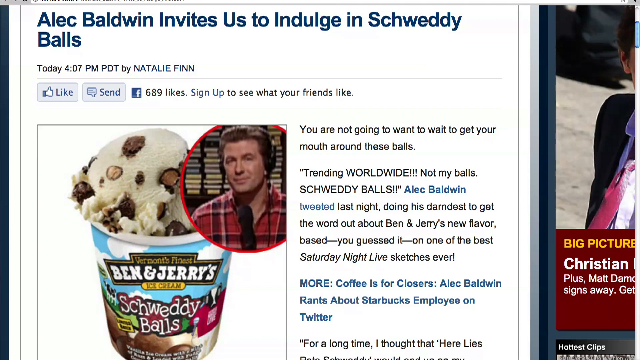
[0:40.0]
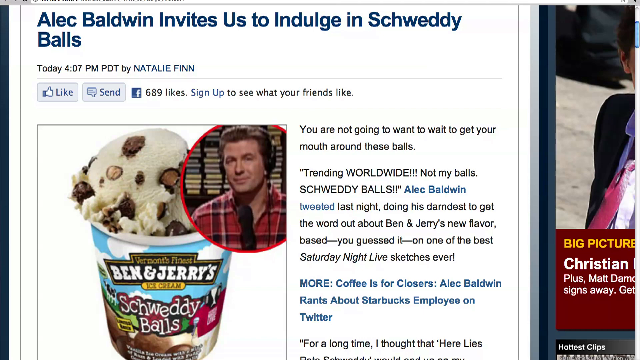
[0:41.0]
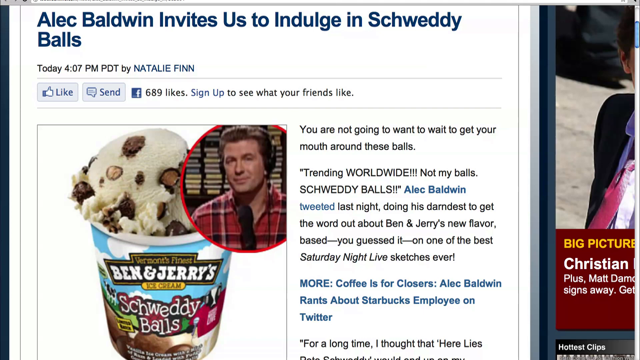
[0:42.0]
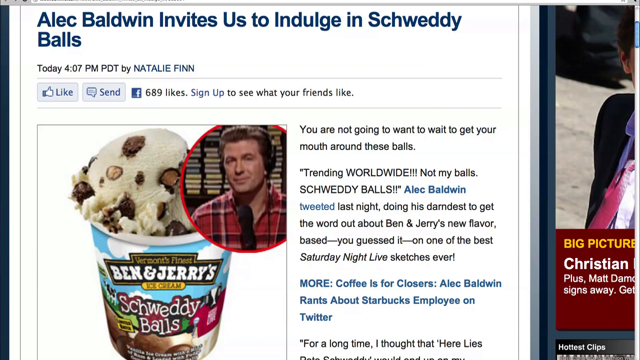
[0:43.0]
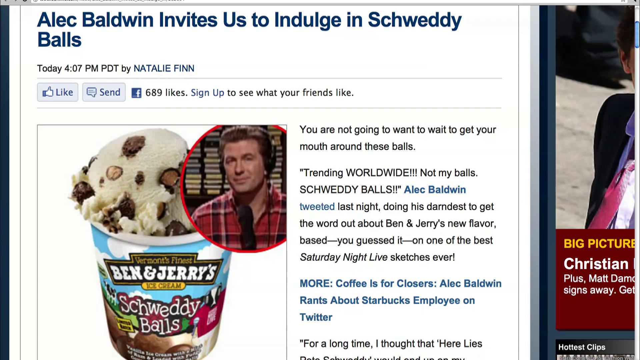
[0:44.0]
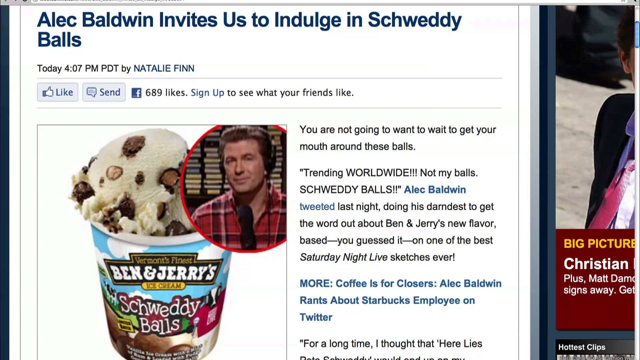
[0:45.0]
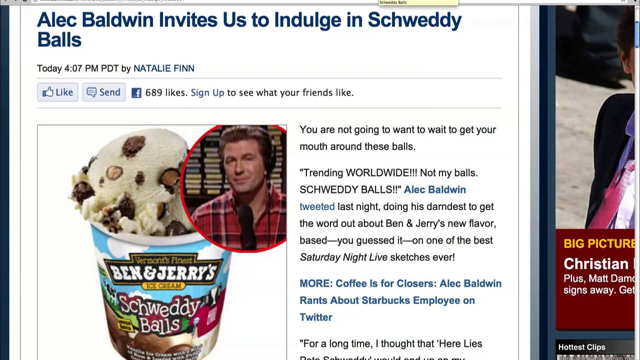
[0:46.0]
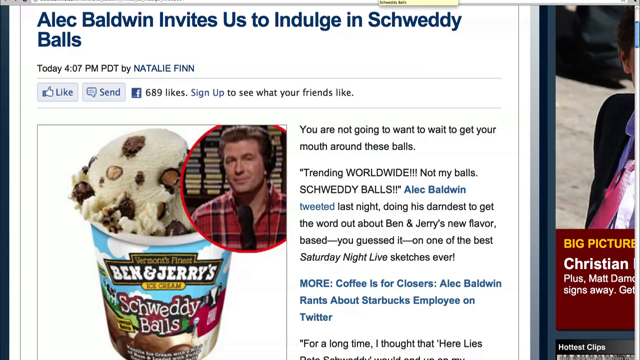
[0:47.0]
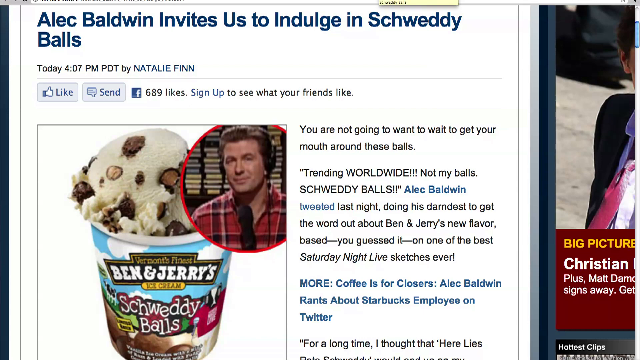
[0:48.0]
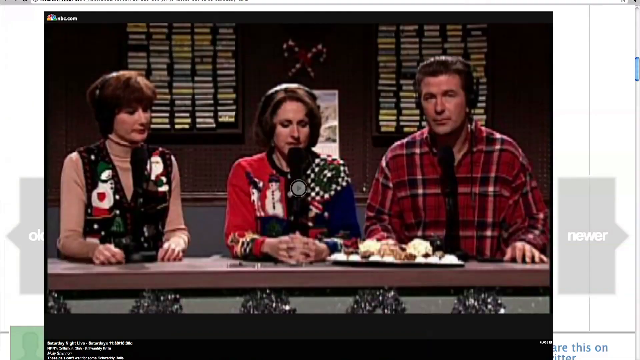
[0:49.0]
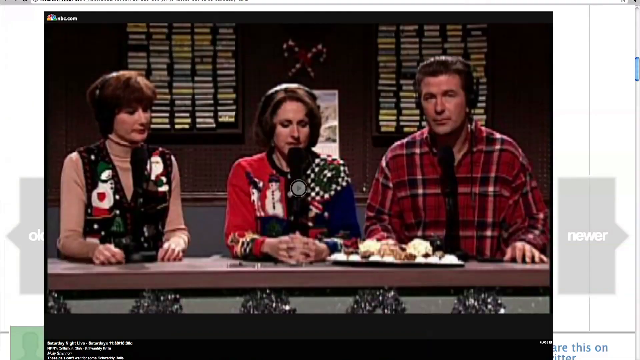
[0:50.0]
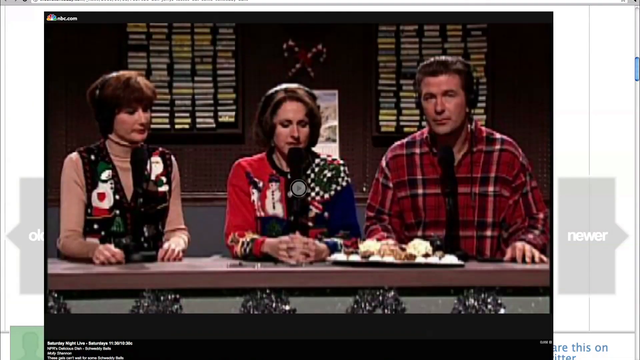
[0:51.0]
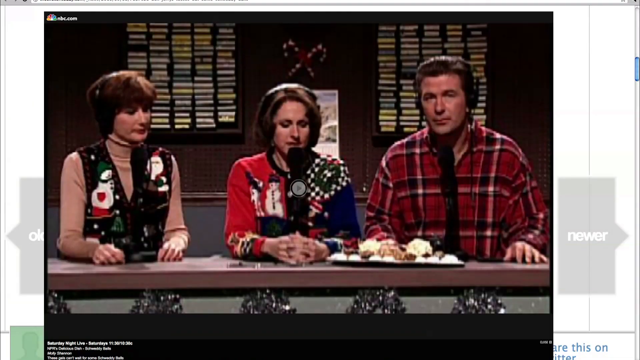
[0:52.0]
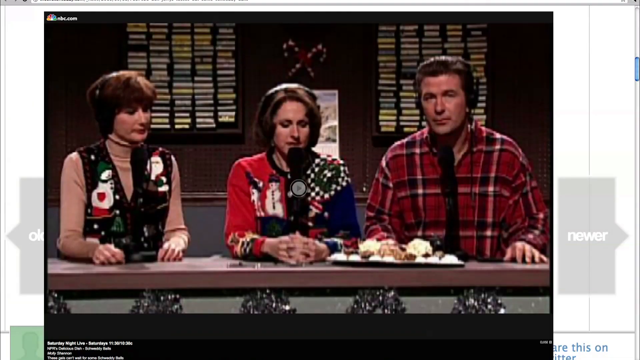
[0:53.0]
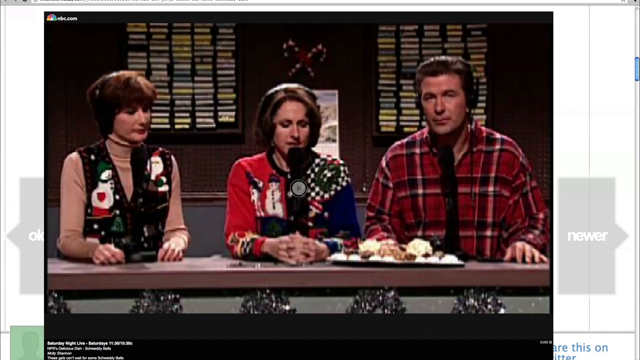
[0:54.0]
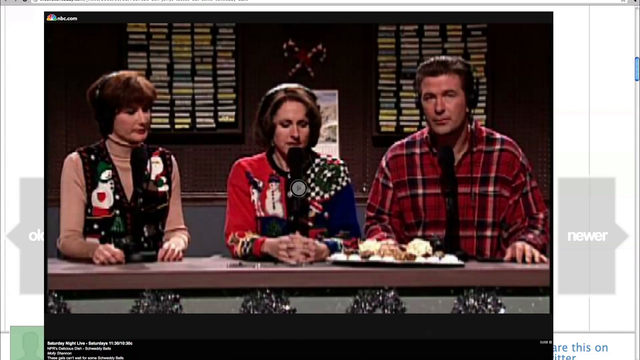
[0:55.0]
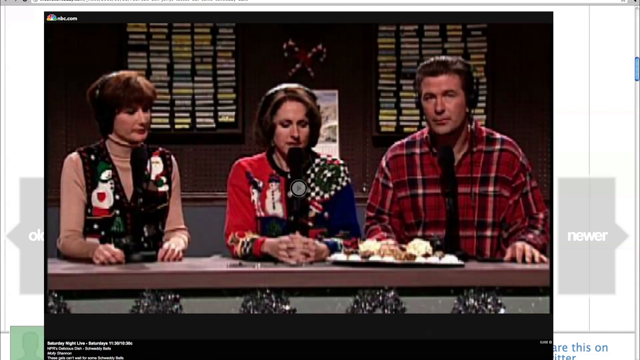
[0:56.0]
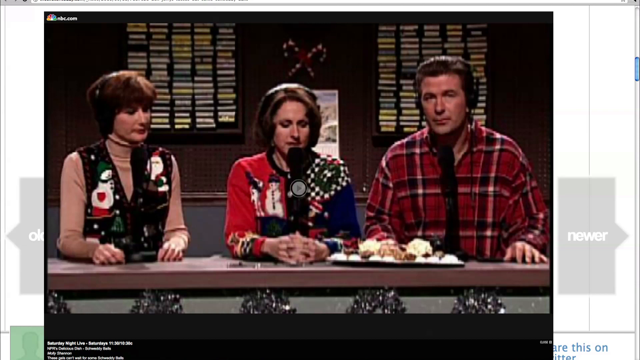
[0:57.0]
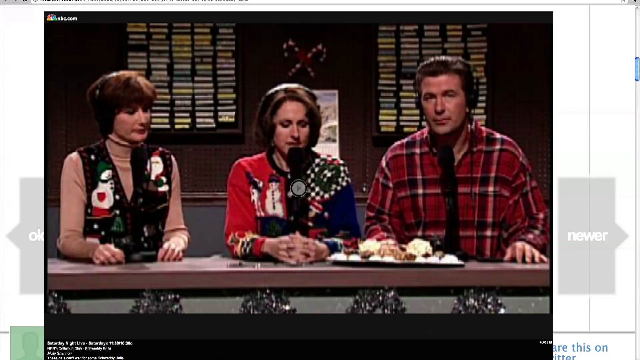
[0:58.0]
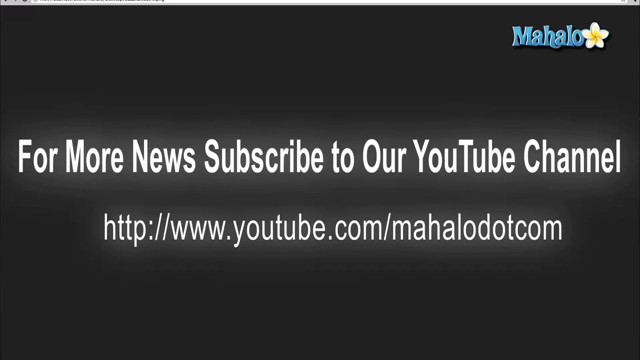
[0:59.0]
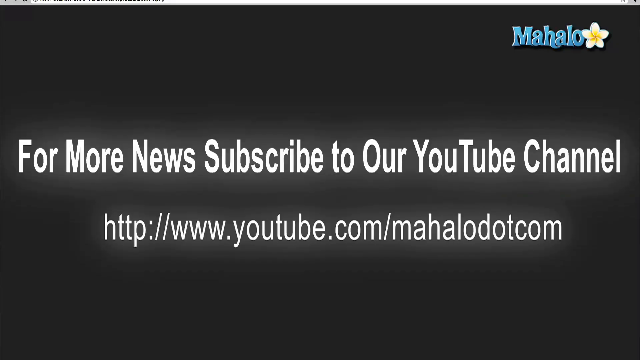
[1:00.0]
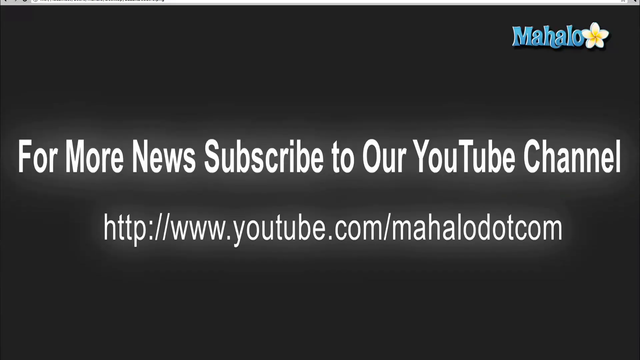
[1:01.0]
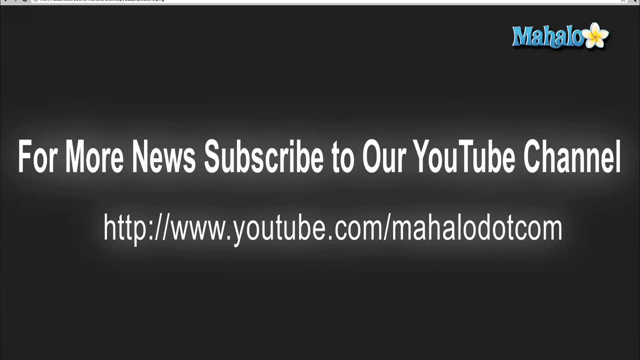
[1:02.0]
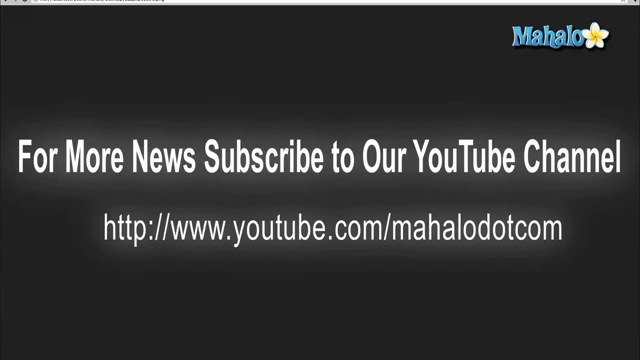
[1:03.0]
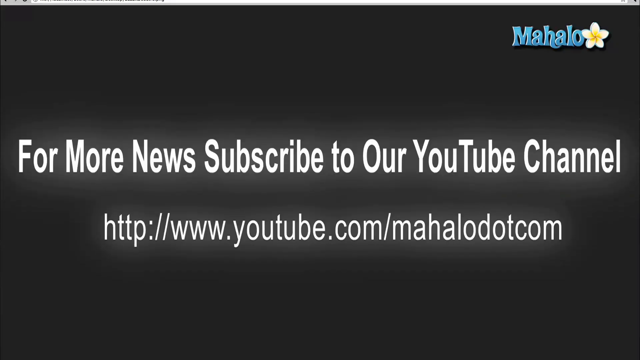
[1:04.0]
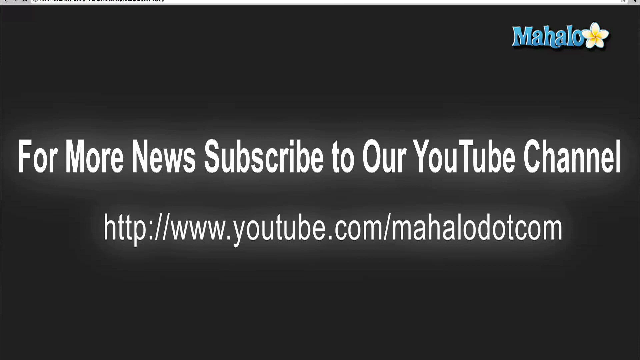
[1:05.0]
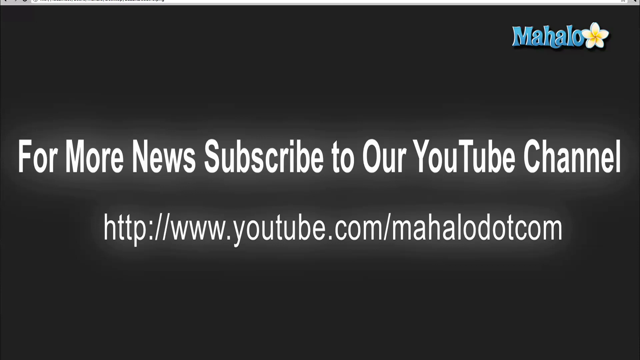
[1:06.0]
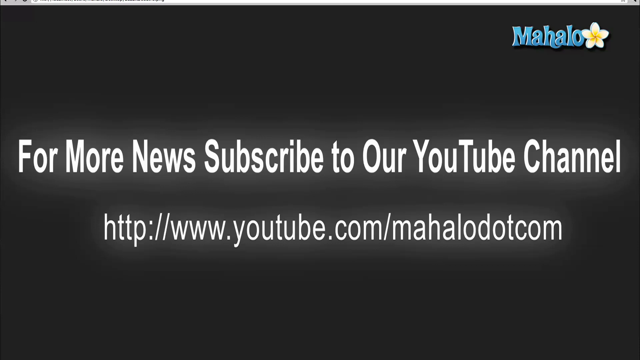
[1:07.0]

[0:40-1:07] An article in blue text reads "Alec Baldwin invites us to indulge in sweaty balls", posted today at 4:07 PM PDT by Natalie Finn. There is a Facebook like button, a send message button, and a small Facebook icon with black text reading "689 likes, sign up to see what your friends like". A photo shows Alec Baldwin next to a container of Vermont's finest Ben & Jerry's ice cream, sweaty balls. Black and blue text to the right reads: "You are not going to want to wait to get your mouth around these balls. Trending worldwide, not my balls, sweaty balls. Alec Baldwin tweeted last night, doing his darndest to get the word out about Ben & Jerry's new flavor based, you guessed it, on one of the best Saturday Night Live sketches ever. More coffees for closers, Alec Baldwin rants about Starbucks employee on Twitter. For a long time, I thought that here lies", and then the text cuts off. A photo shows a person who is slightly cut off and looks like Christian Slater, with text reading "big picture, Christian" and "Matt Damon signs away", some of it cut off. The view then moves to a screen showing three people sitting at a table: Alec Baldwin and two women sitting next to him, with a plate of food in front of them. What looks like cassettes are in the background, along with some candy canes. The video is on NBC.com, with the option to watch and play it. A transition follows to a gray background with slightly glowing white text reading "For more news, subscribe to our YouTube channel at http://www.youtube.com/mahalo.com". A blue icon in the top right corner reads "Mahalo" with a white flower next to it.